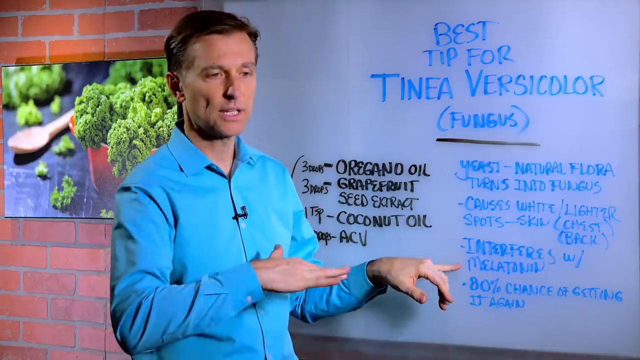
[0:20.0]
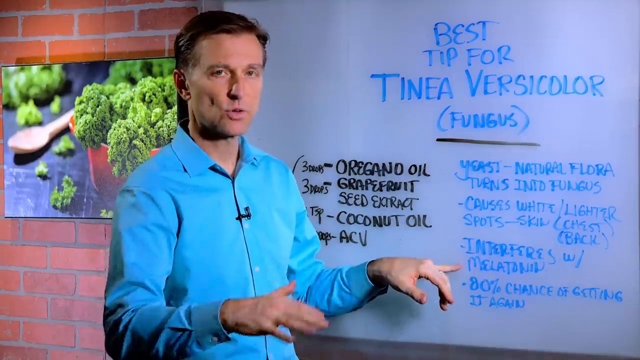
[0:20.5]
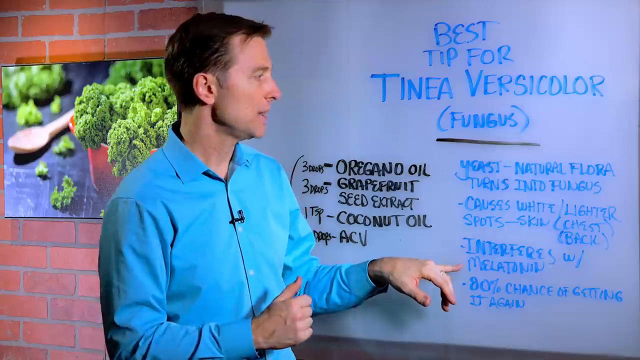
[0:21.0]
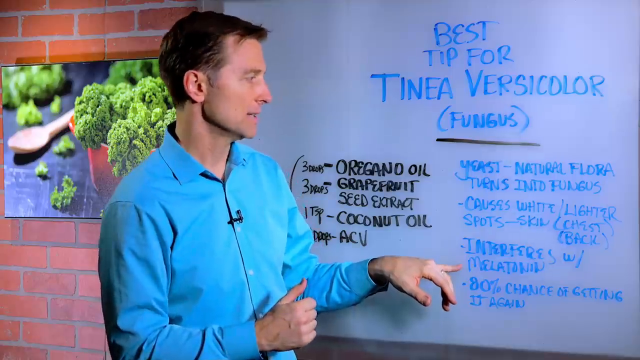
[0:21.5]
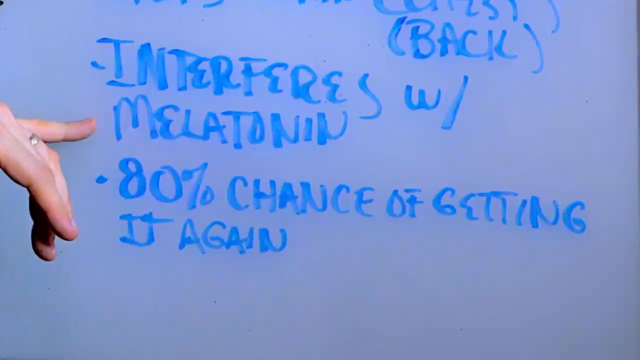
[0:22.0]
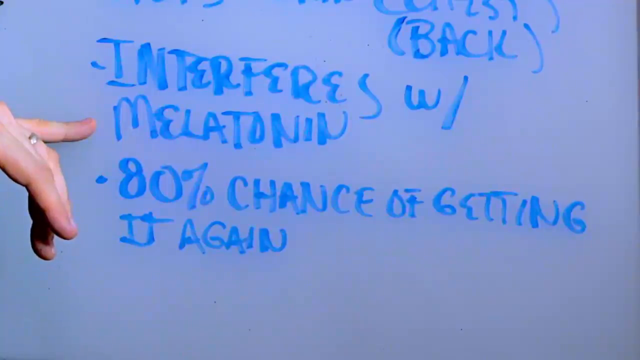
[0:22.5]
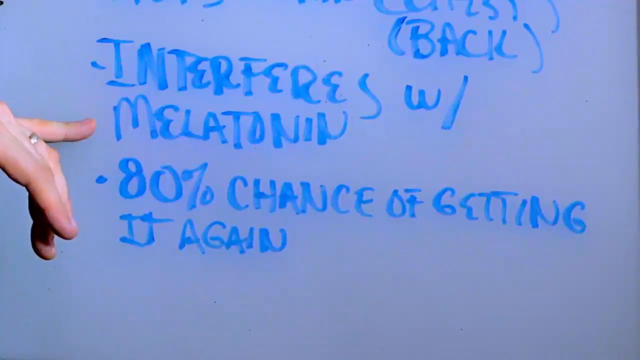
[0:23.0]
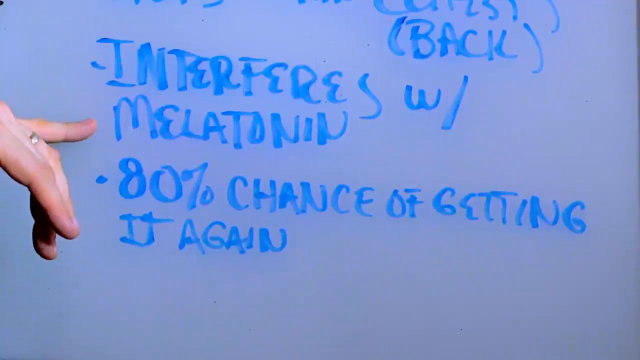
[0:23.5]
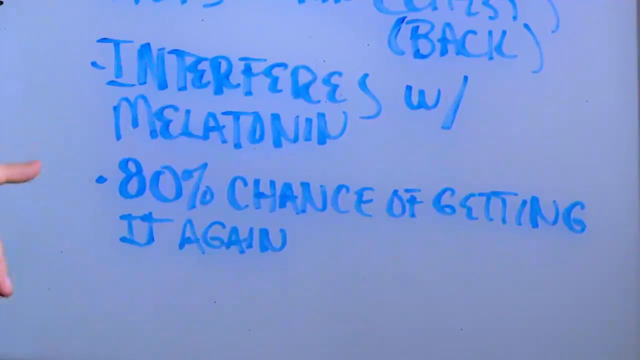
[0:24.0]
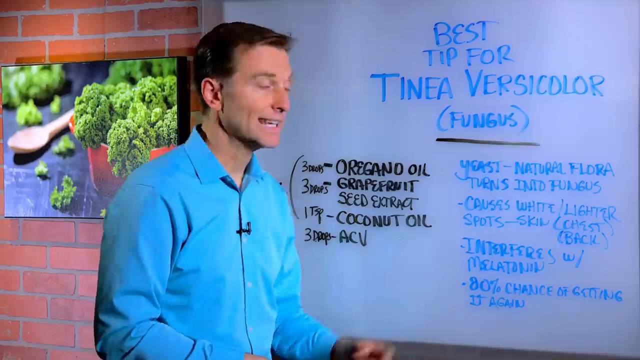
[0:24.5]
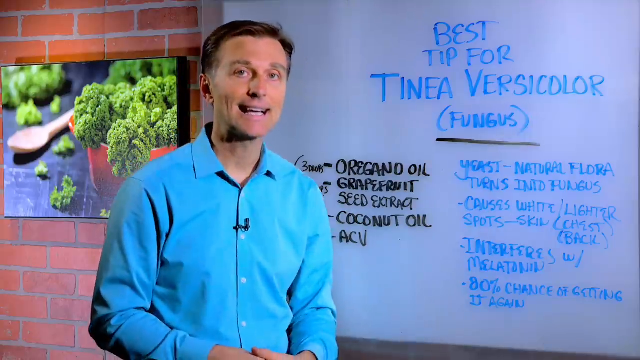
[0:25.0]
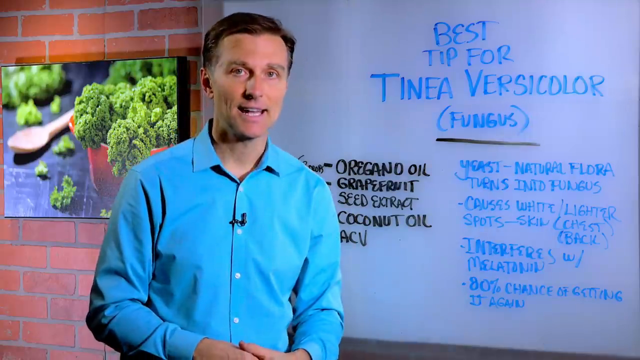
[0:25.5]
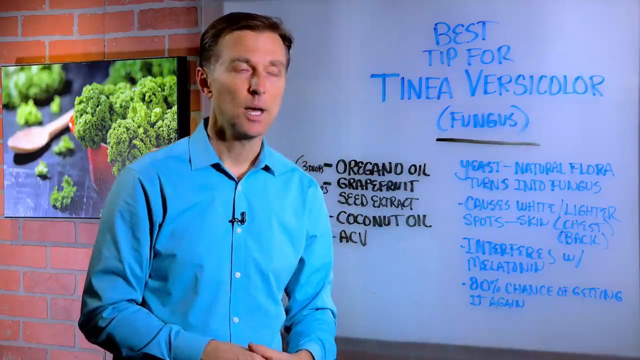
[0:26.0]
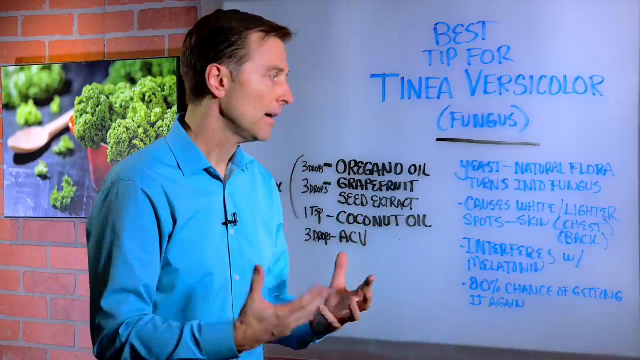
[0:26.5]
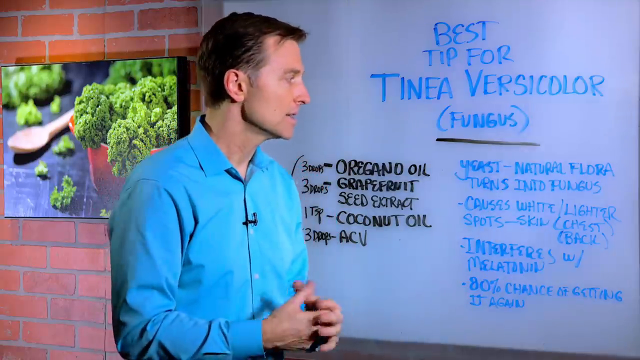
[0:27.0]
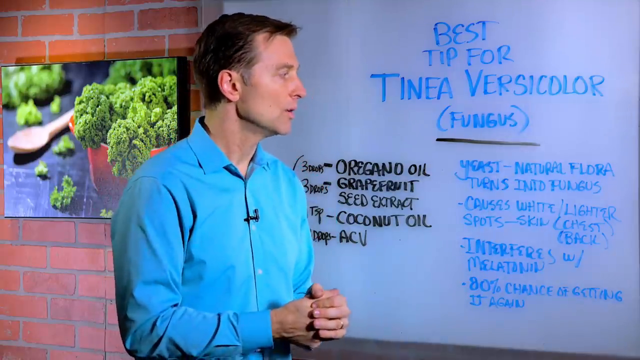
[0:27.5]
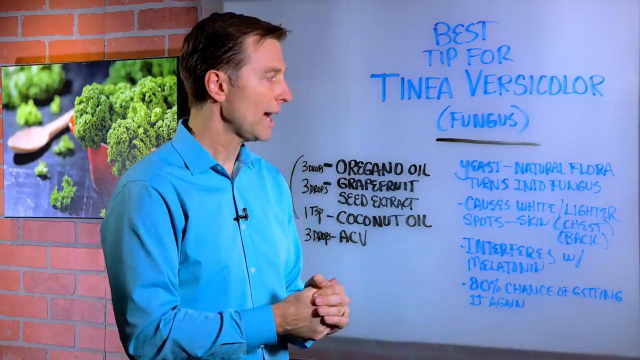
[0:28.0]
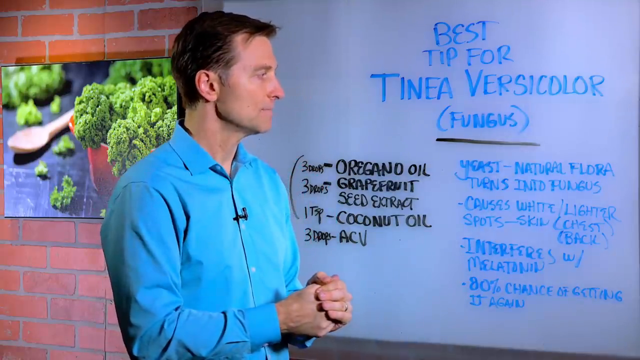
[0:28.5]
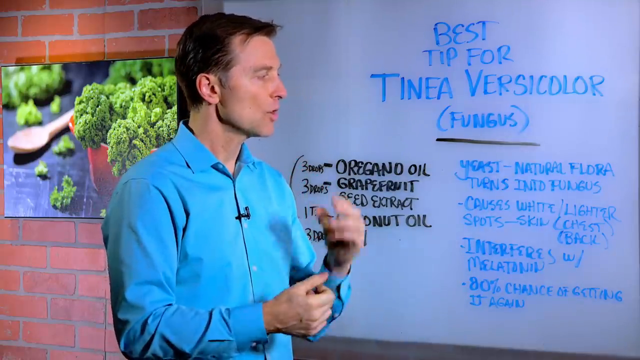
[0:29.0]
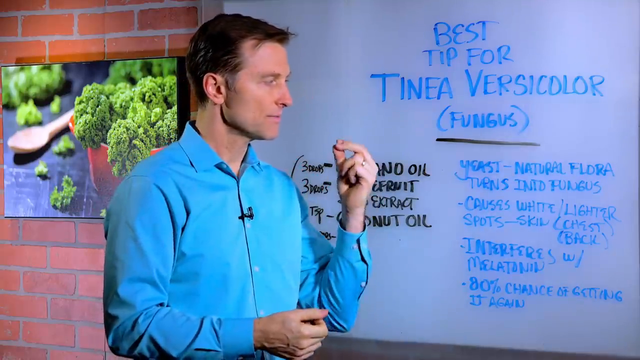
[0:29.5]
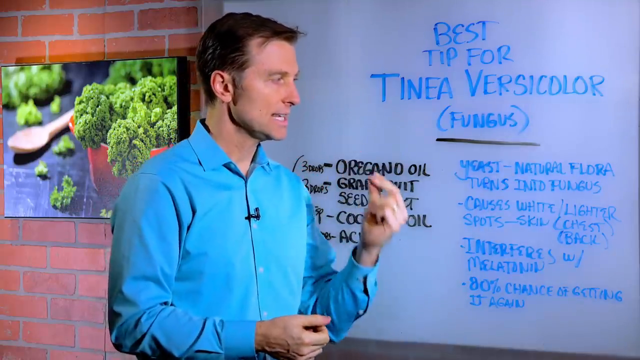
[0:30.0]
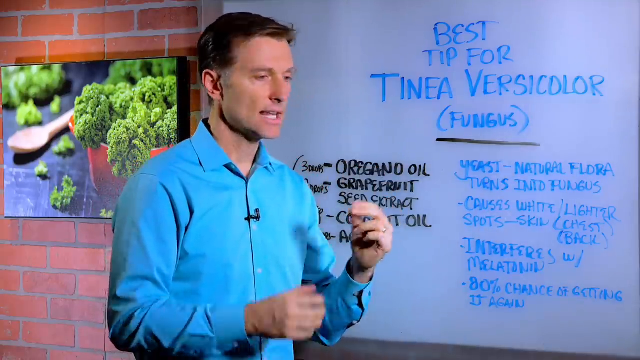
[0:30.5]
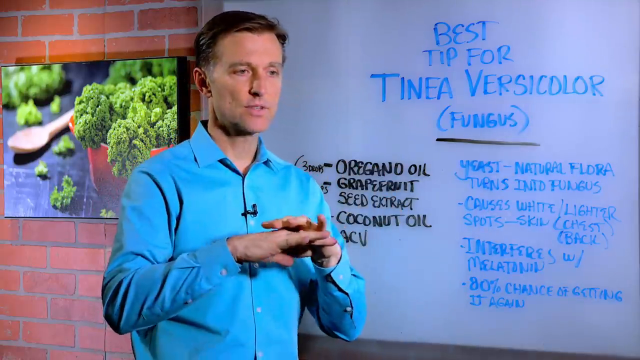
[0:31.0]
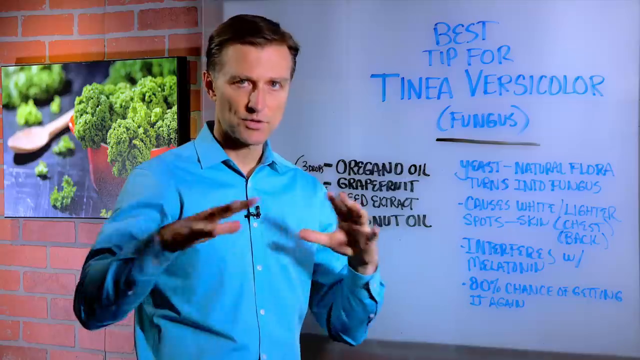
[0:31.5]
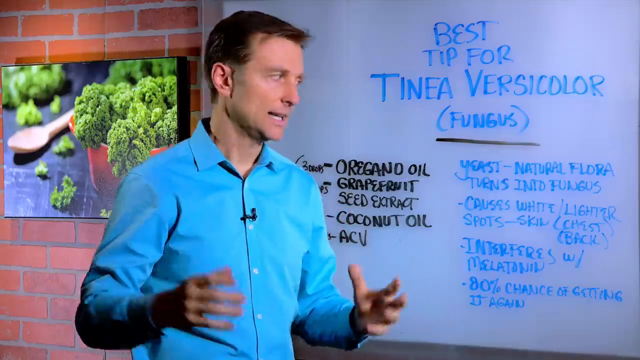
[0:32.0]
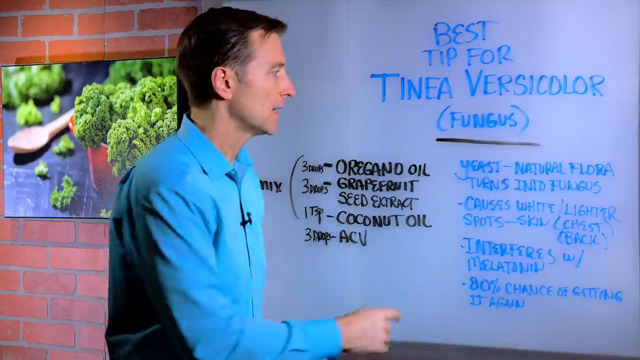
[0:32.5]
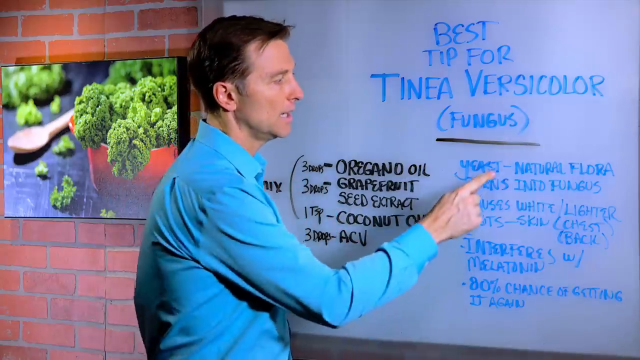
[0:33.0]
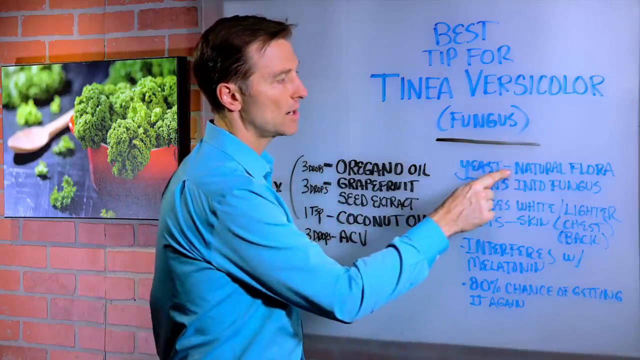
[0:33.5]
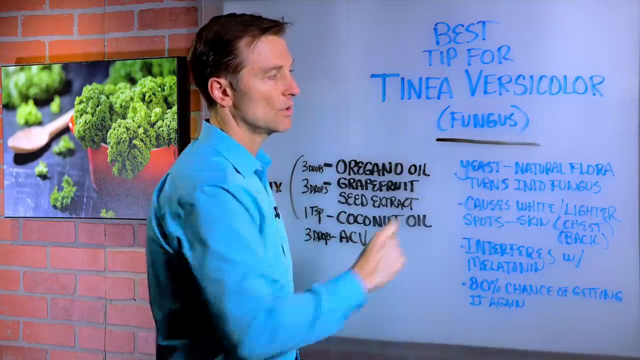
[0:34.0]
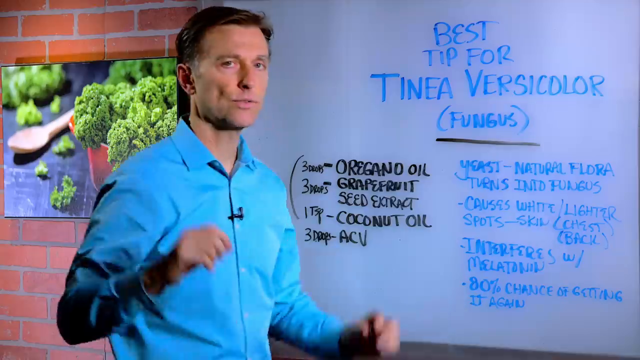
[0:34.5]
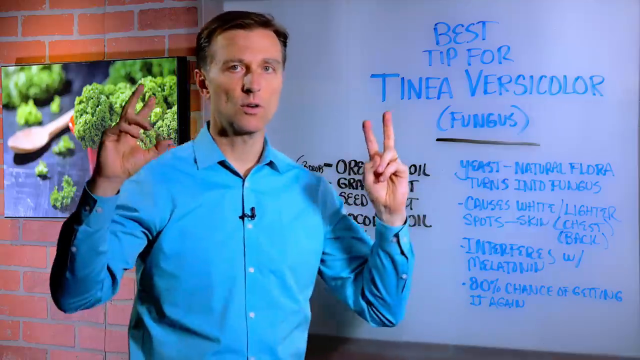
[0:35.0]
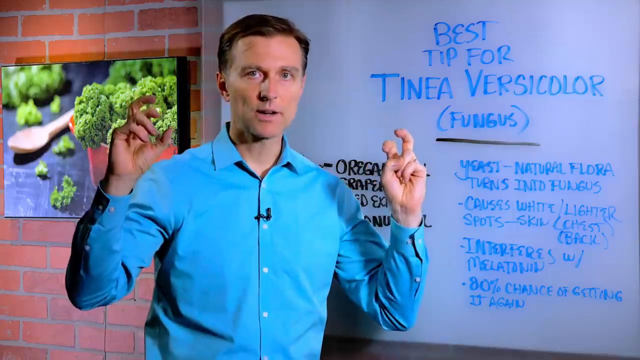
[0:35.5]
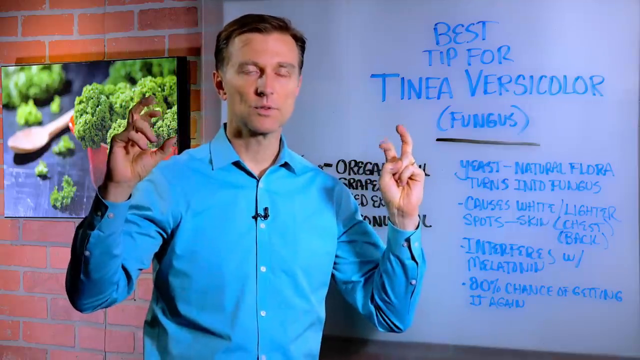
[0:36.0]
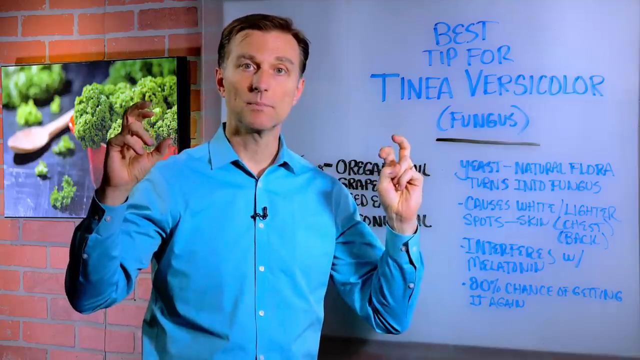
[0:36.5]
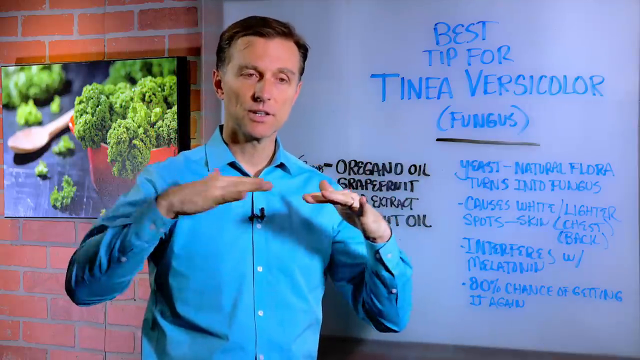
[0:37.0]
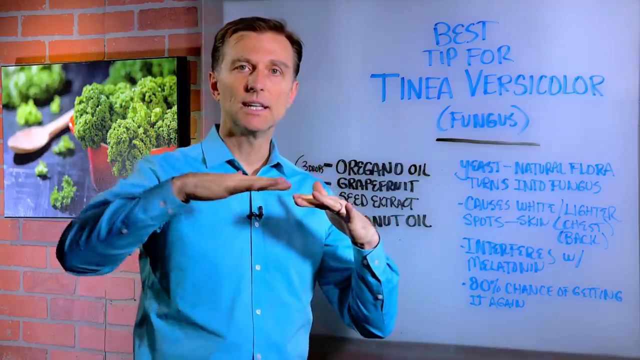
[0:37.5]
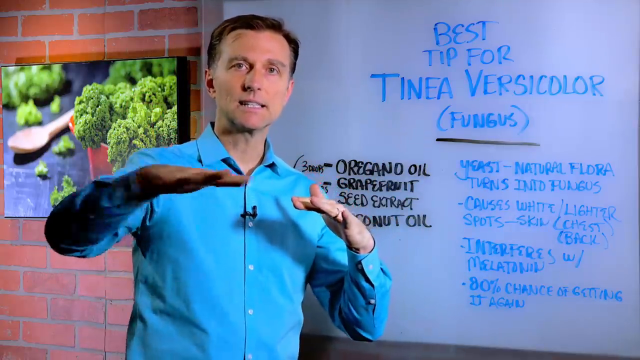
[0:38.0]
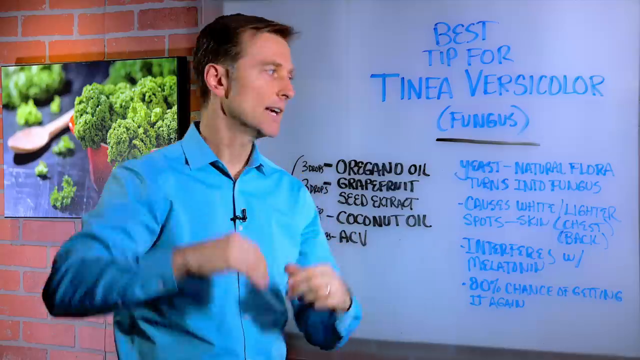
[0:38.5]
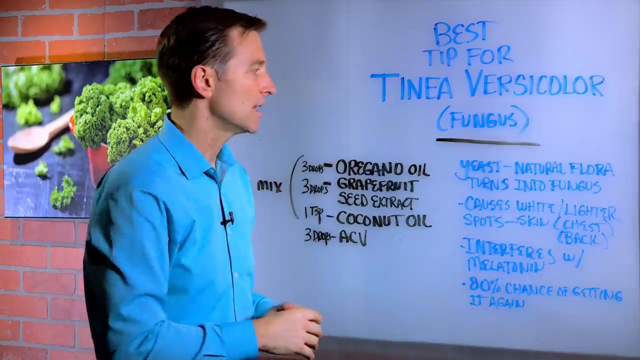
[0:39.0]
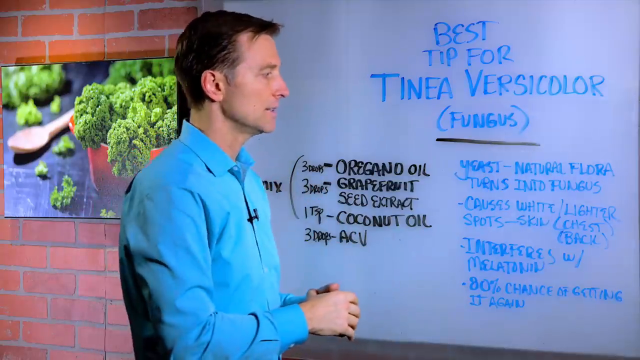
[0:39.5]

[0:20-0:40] The camera zooms in on the two bottom blue dot points, which say "interferes with melatonin" and "80% chance of getting it again"; he motions with his pinky finger toward them. The shot zooms back out and he talks, motioning with his hands. He repeatedly makes a gesture with his fingers, apparently to indicate something small, and then motions with his hands as if describing something big. He points to yeast, talking about the natural flora, which he puts in quotation marks, and then extends his arm. He makes a lot of hand motions throughout.